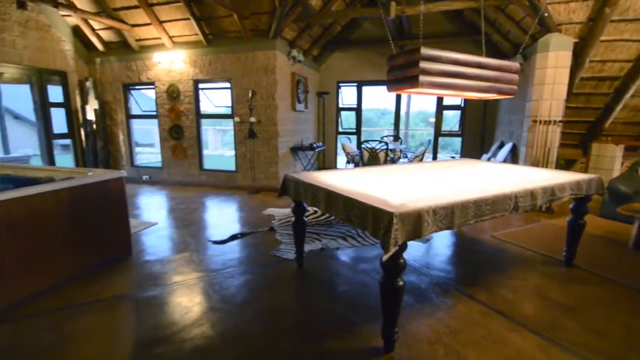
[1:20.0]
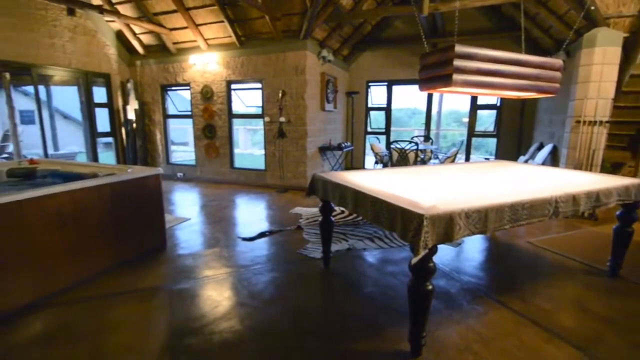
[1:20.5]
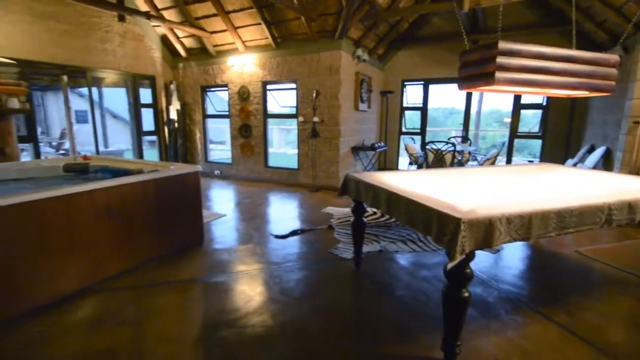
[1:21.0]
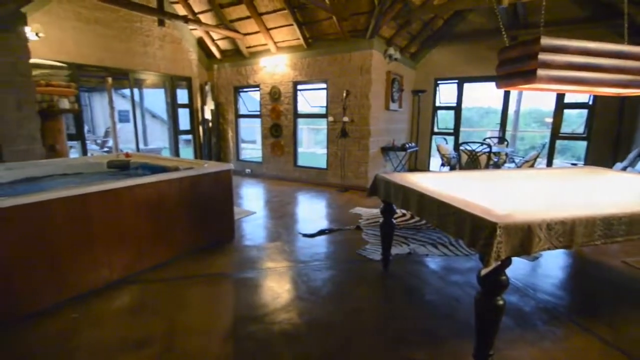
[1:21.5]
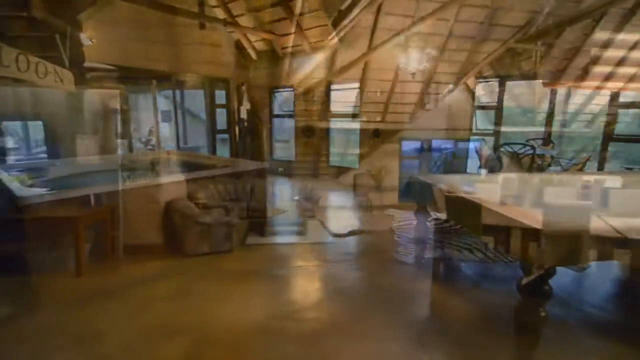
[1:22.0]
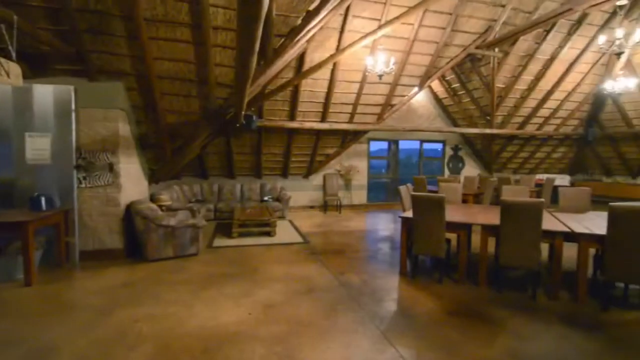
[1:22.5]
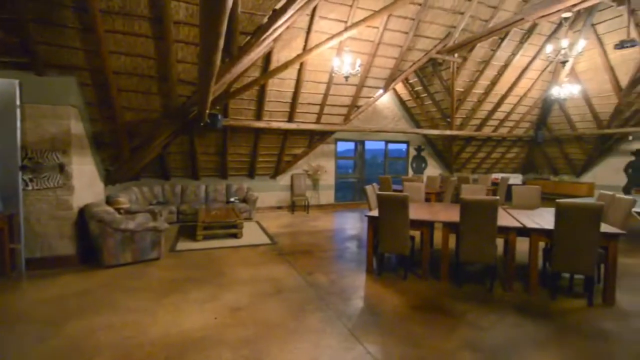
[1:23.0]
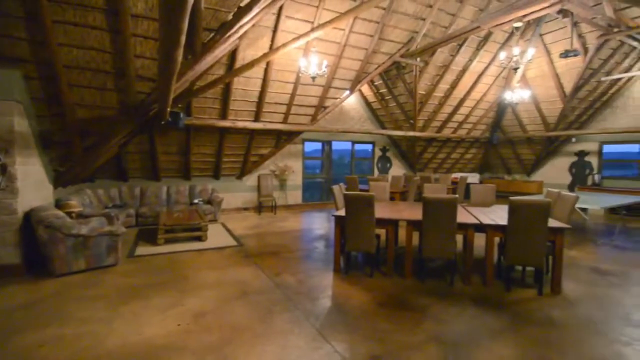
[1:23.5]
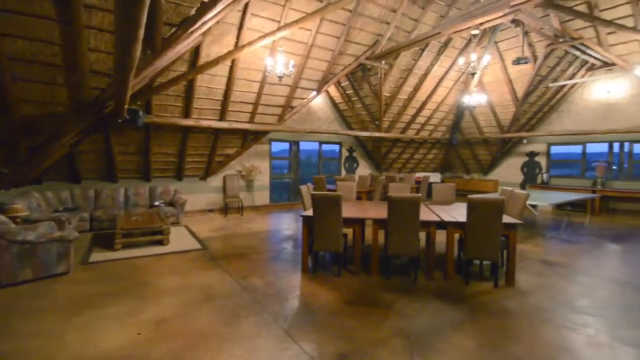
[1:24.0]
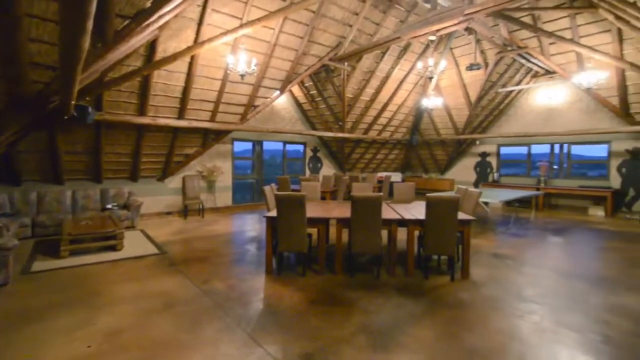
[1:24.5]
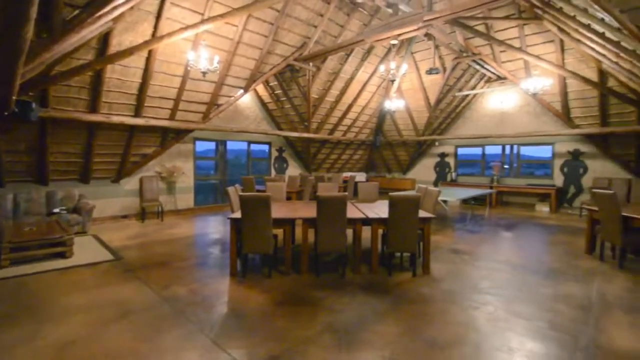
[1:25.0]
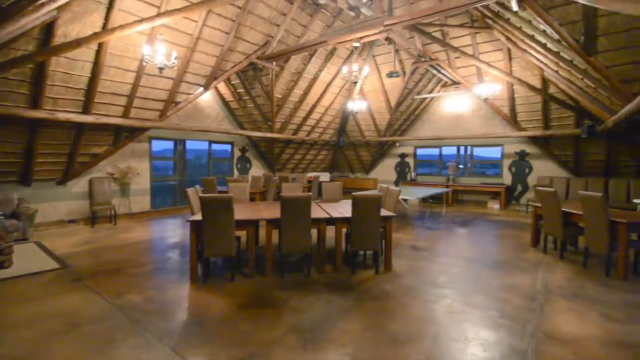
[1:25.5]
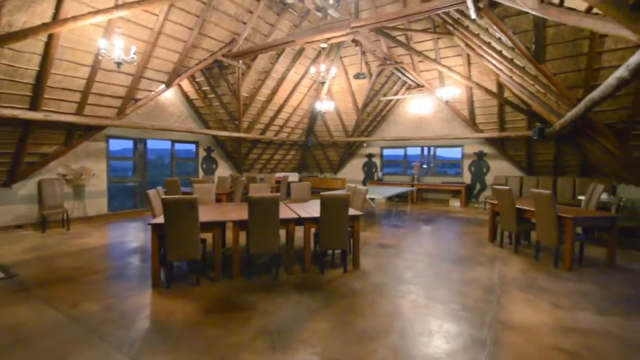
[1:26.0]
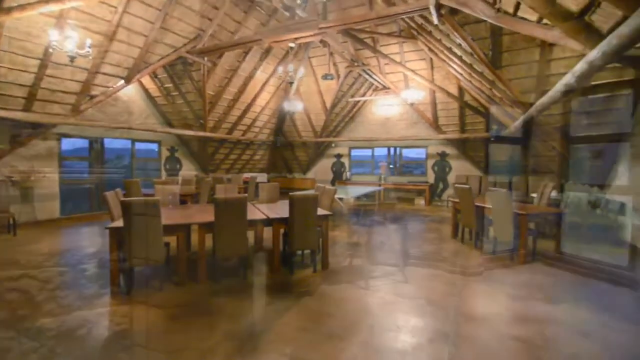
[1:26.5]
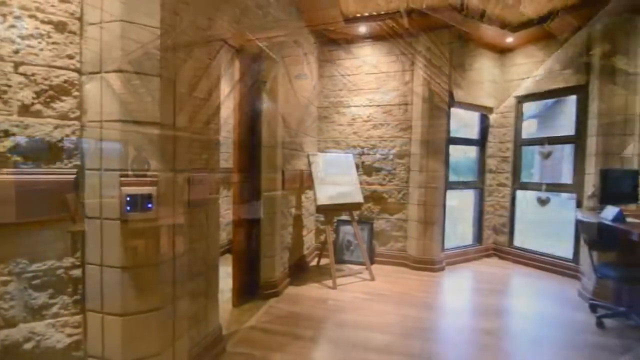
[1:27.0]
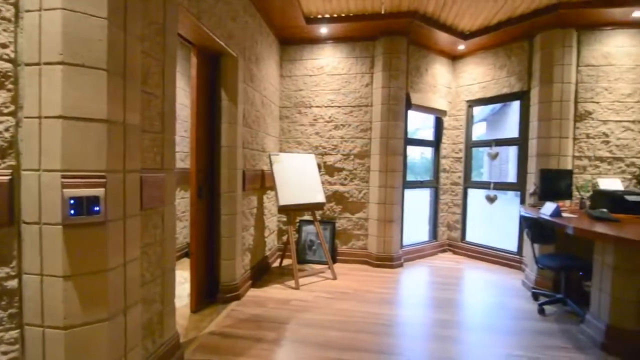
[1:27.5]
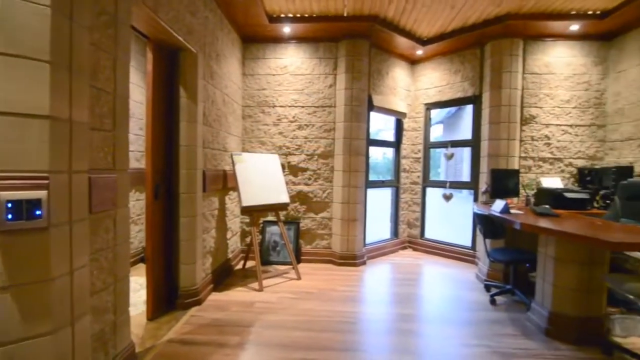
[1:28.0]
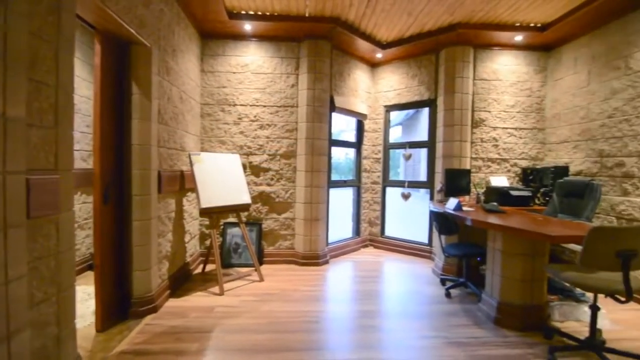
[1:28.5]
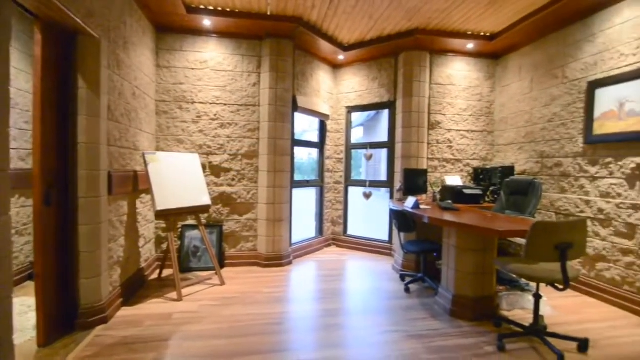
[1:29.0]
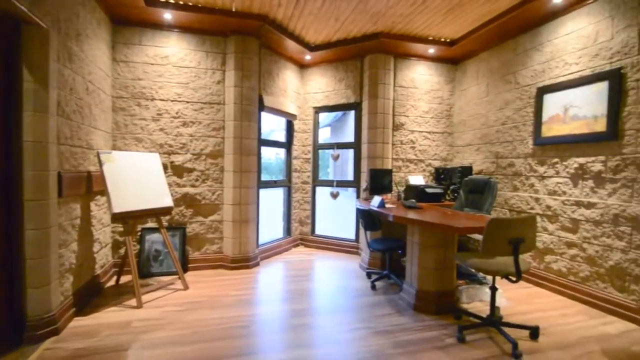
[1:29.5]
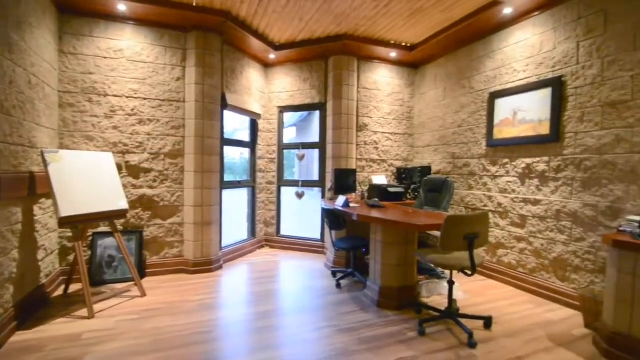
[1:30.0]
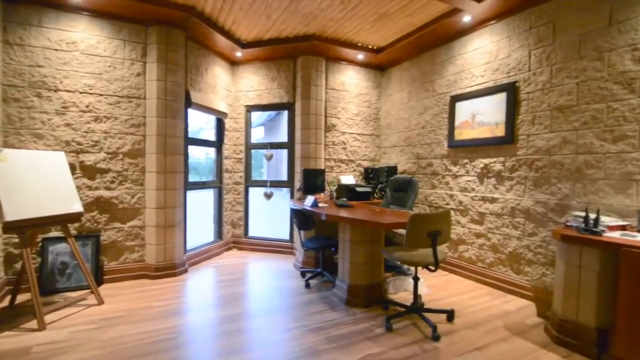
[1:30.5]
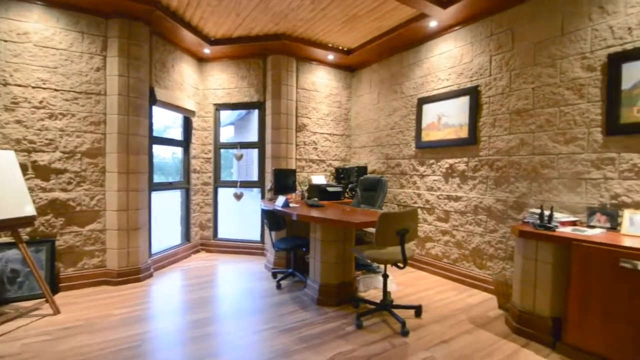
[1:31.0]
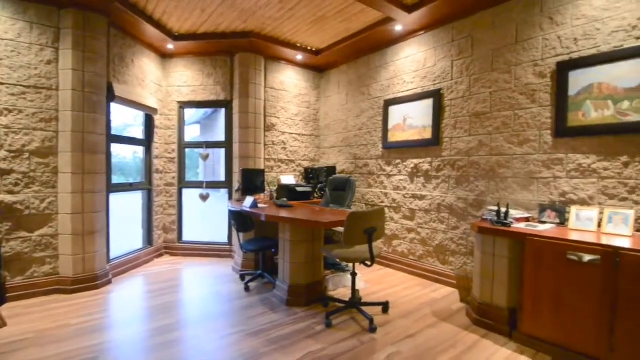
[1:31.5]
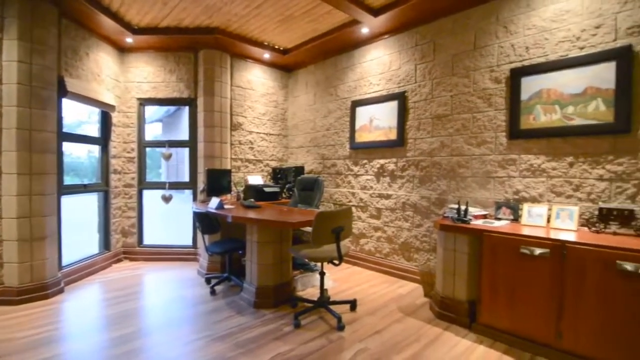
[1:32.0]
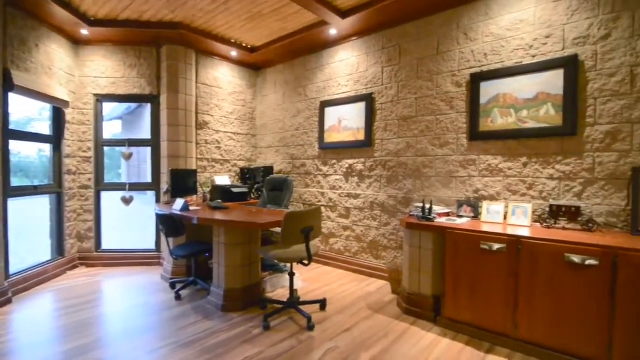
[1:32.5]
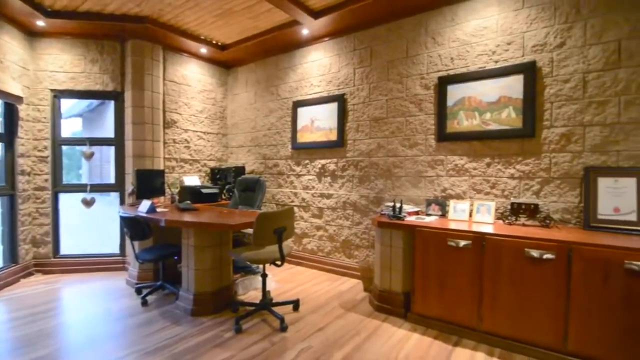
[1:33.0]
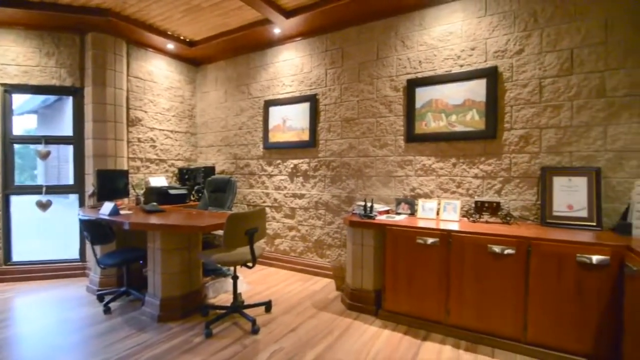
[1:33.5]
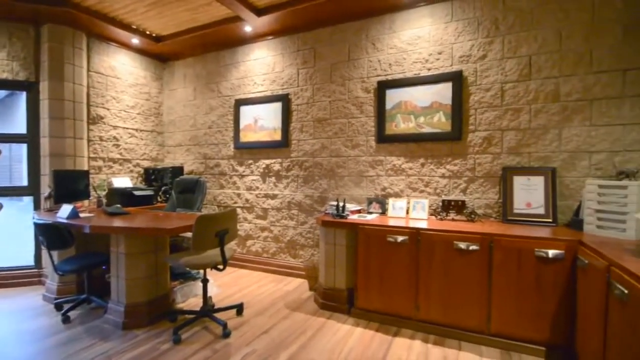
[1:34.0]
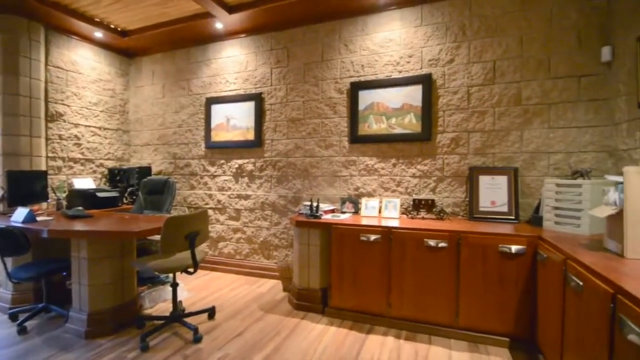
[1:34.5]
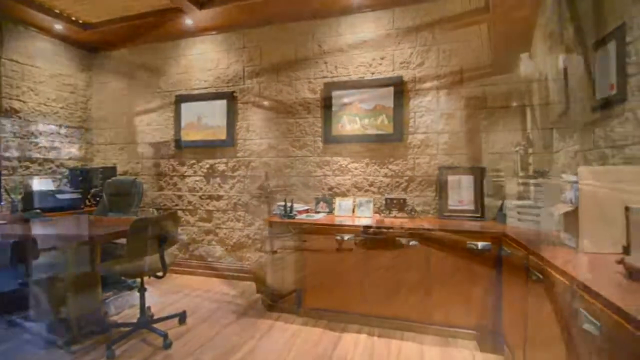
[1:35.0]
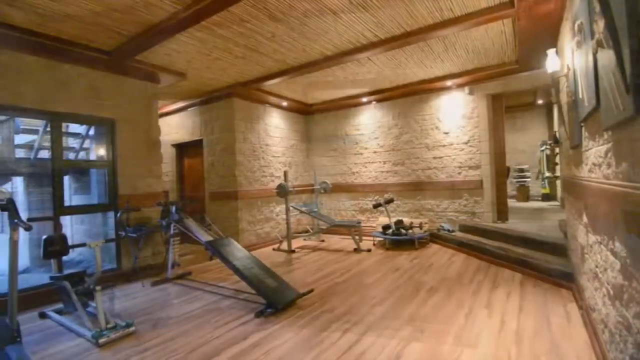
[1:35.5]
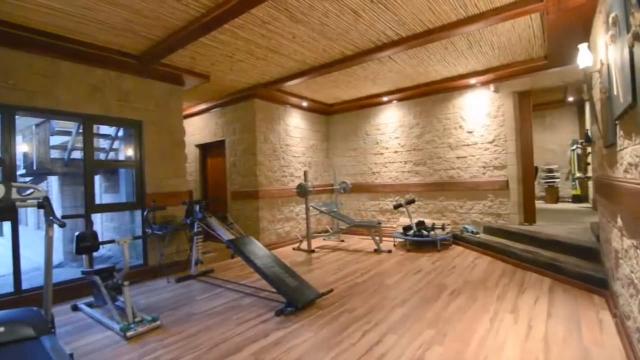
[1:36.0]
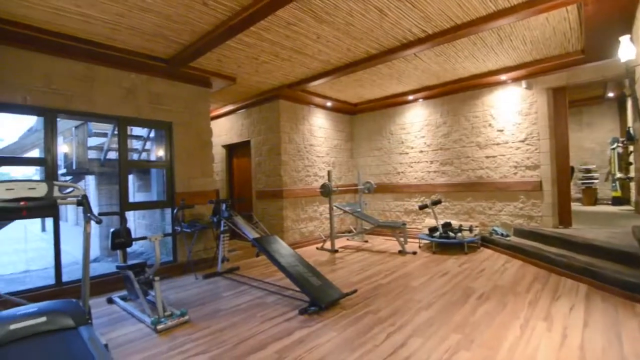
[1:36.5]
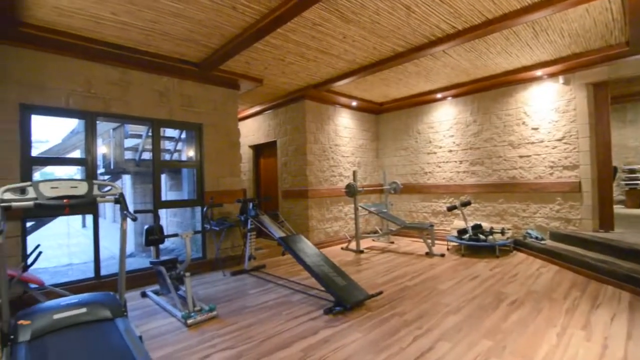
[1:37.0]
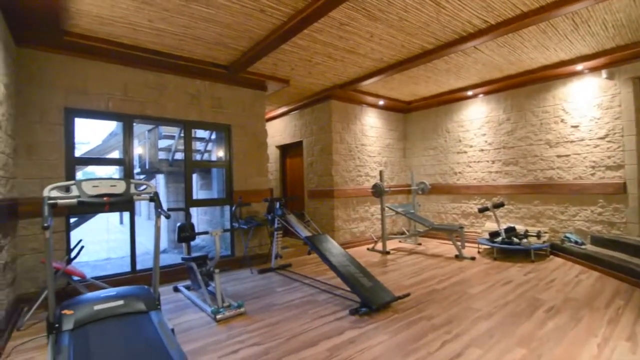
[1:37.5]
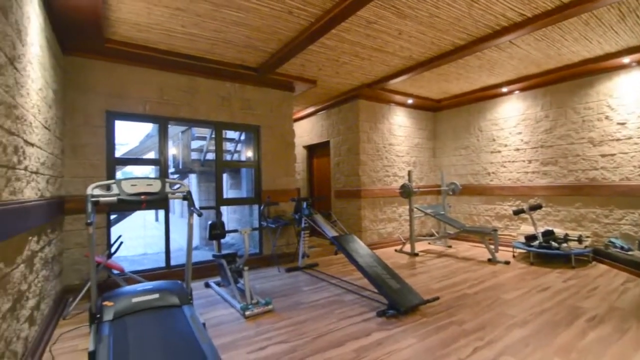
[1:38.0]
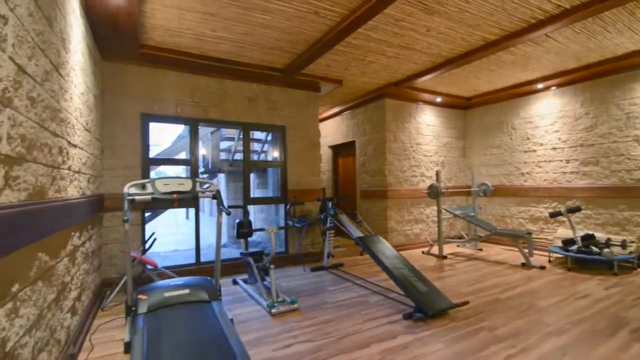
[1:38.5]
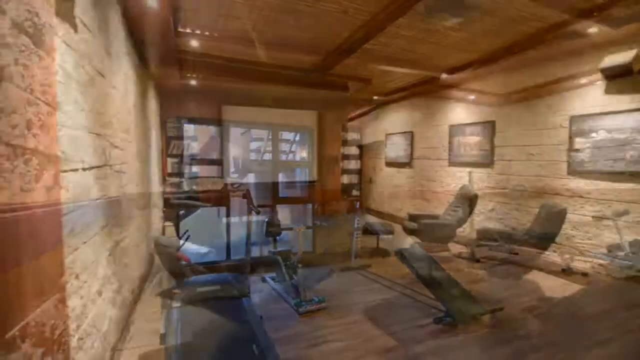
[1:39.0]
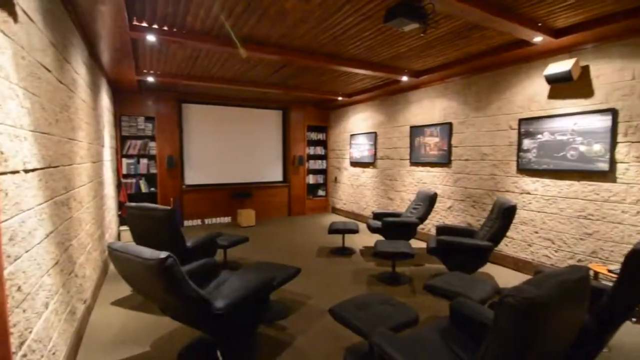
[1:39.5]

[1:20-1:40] The big house has an open floor plan, with one room flowing into the other. It has many tables, including a couple of dining room tables, and it looks like it may have a home office. There is a gym with equipment and a movie room. There looks to be a jacuzzi next to the billiards table. Through the windows something is visible, and there is a cowboy image near the window; the walls look like painted brick, like a stone wall. In the movie room a big flat screen TV is built in, and there are a lot of seats. There appears to be a security system and possibly an elevator.